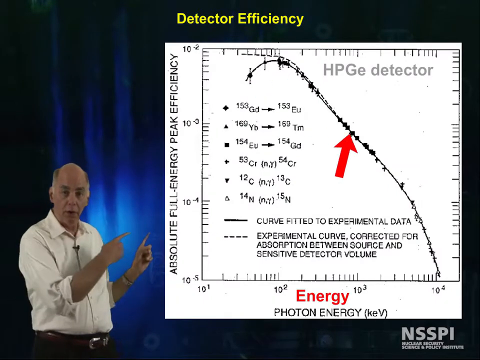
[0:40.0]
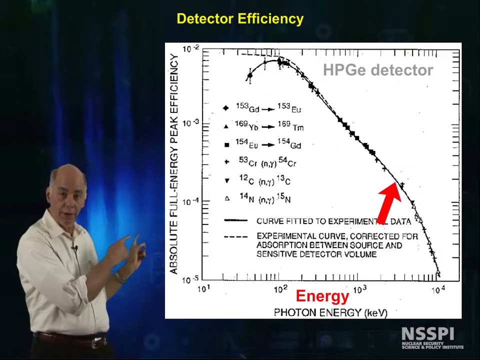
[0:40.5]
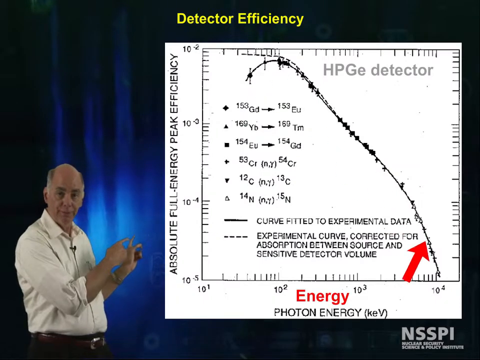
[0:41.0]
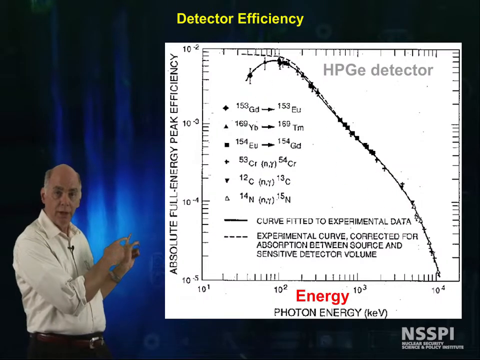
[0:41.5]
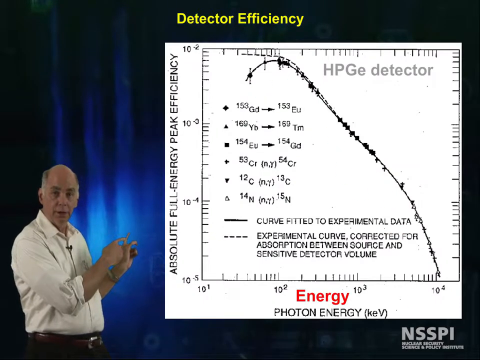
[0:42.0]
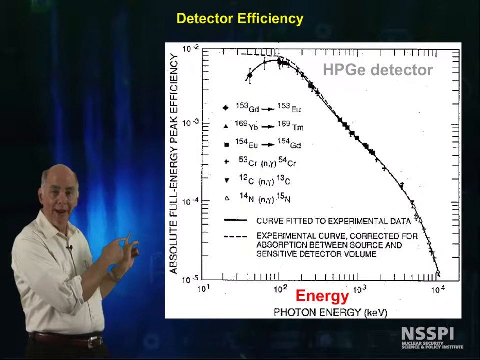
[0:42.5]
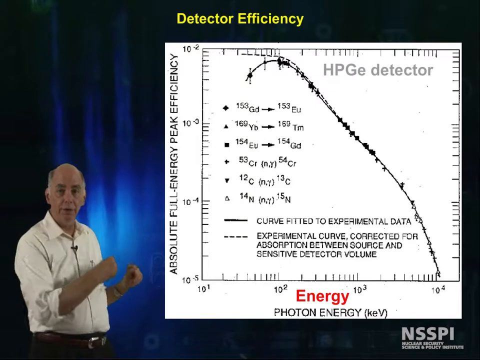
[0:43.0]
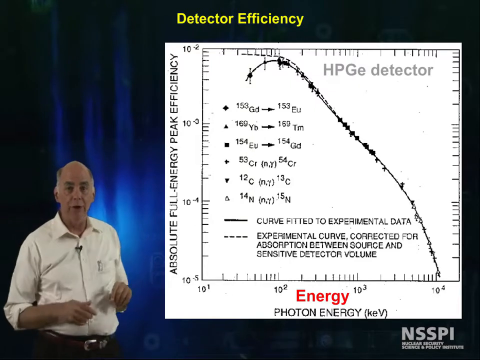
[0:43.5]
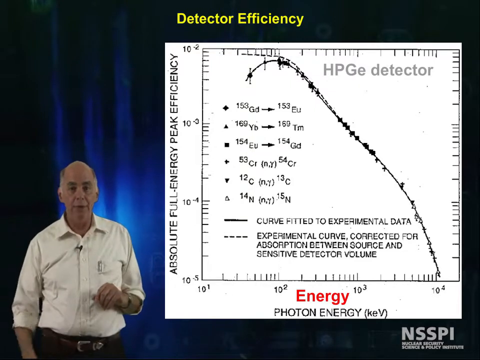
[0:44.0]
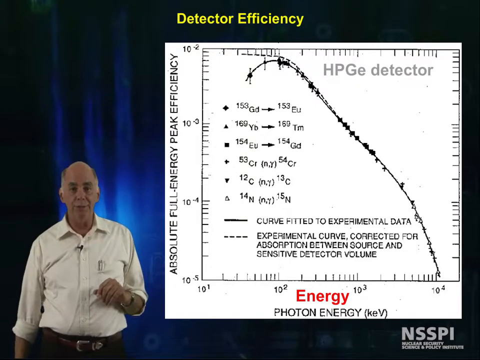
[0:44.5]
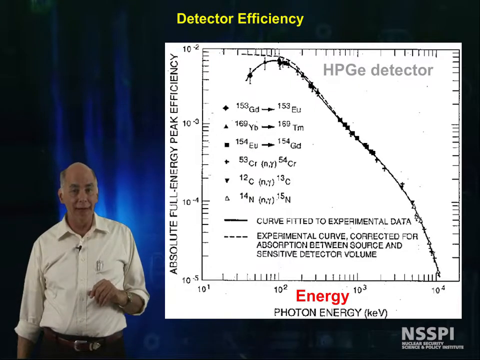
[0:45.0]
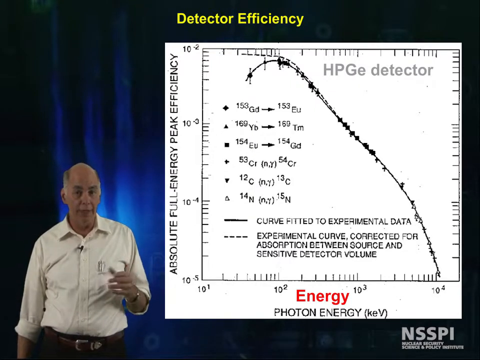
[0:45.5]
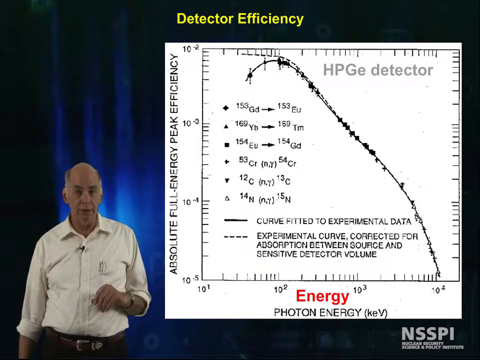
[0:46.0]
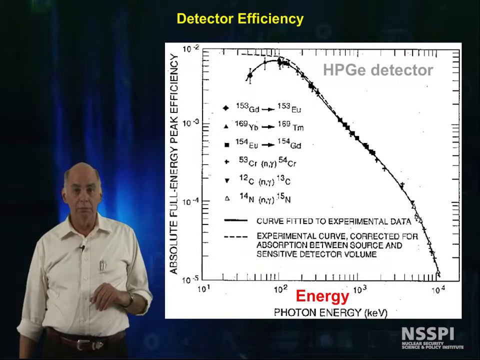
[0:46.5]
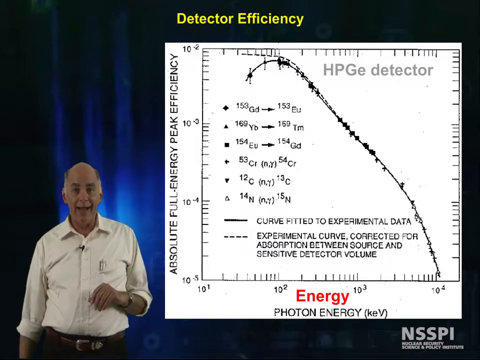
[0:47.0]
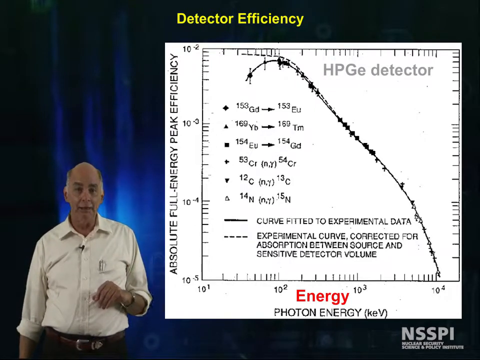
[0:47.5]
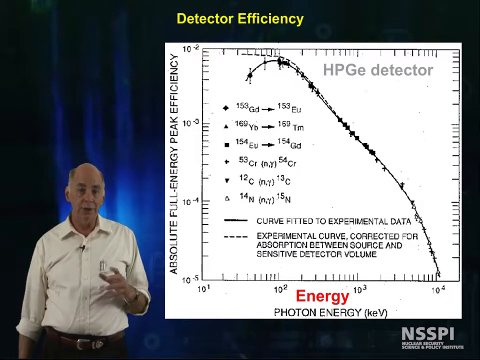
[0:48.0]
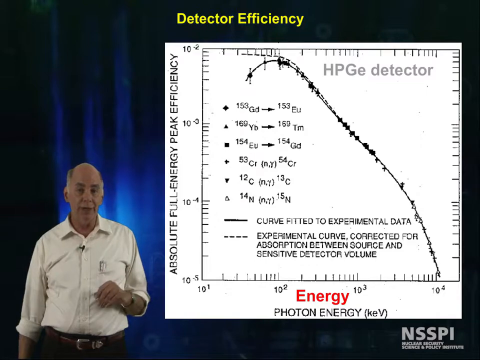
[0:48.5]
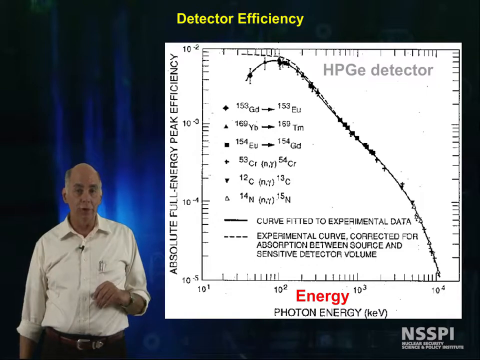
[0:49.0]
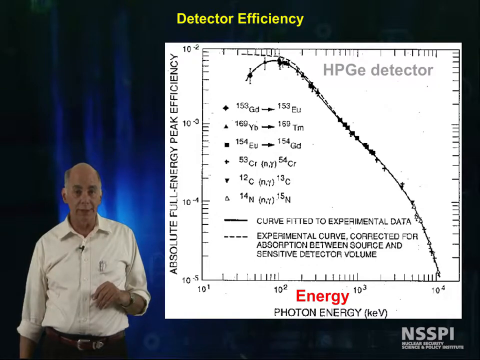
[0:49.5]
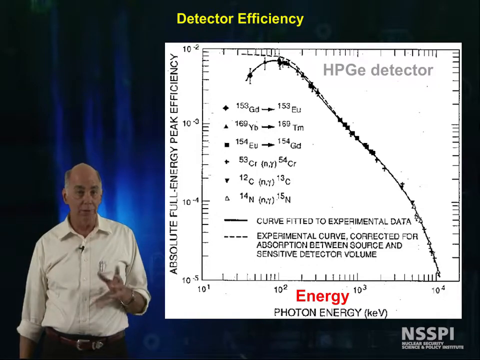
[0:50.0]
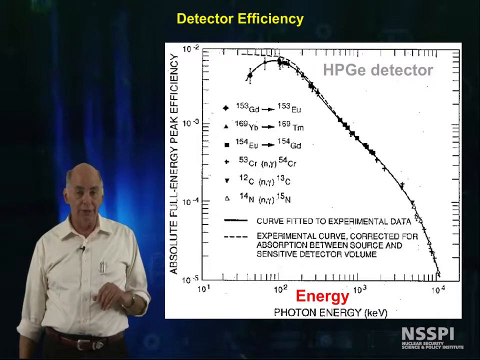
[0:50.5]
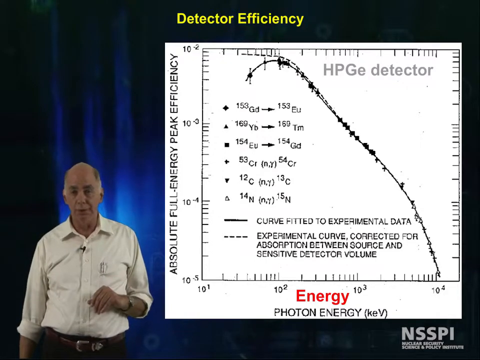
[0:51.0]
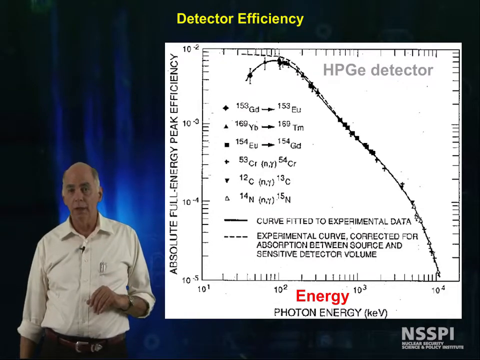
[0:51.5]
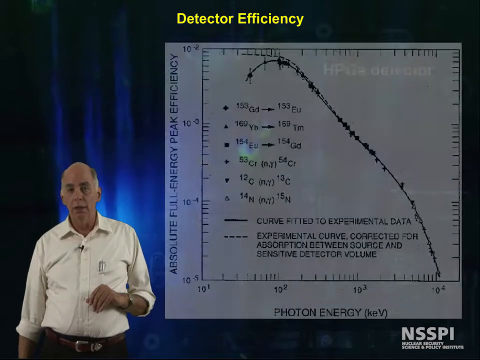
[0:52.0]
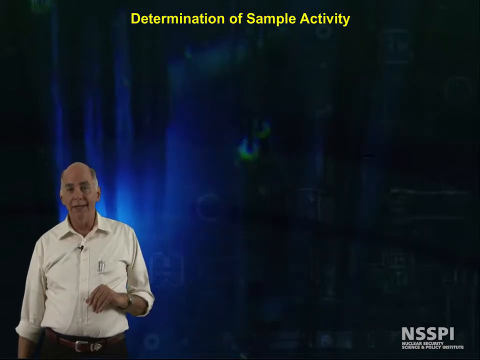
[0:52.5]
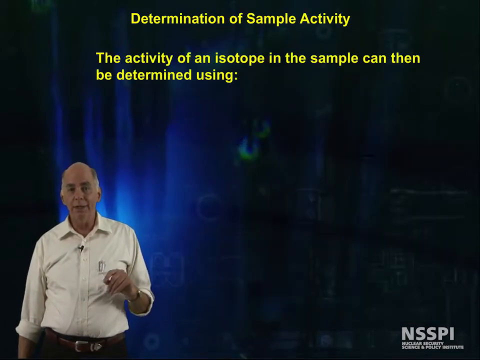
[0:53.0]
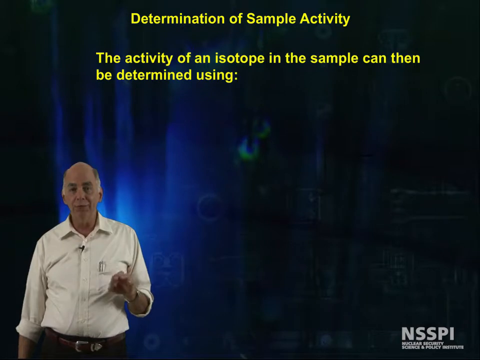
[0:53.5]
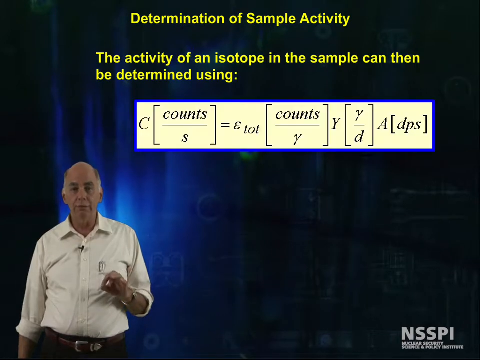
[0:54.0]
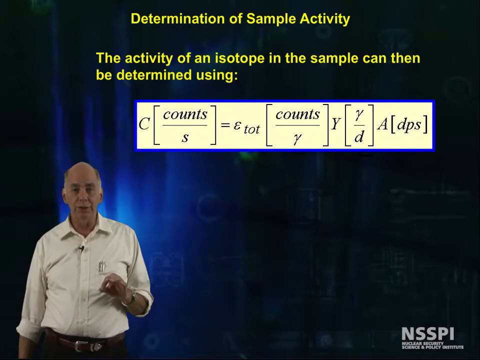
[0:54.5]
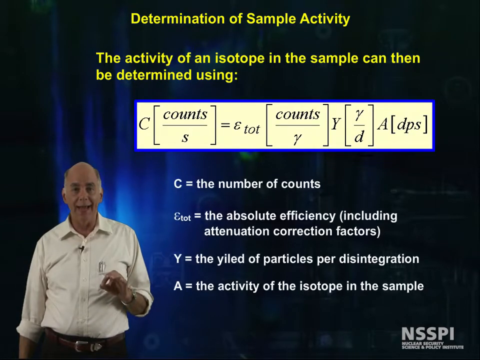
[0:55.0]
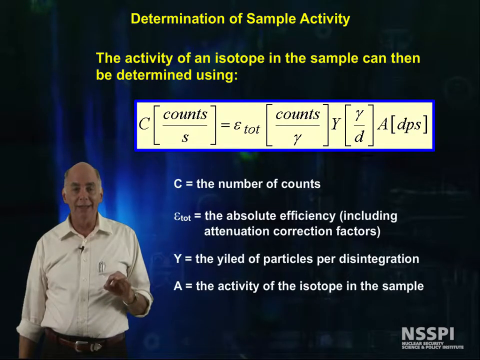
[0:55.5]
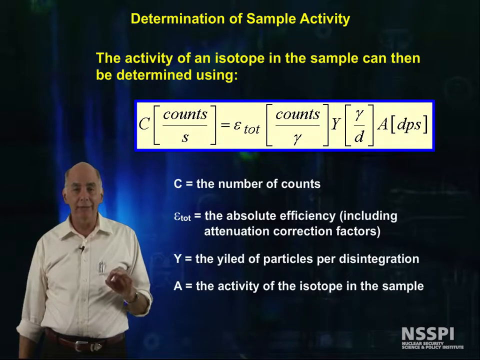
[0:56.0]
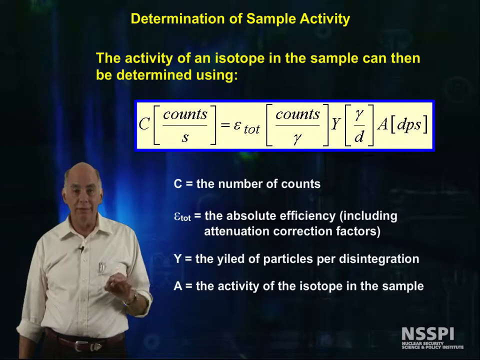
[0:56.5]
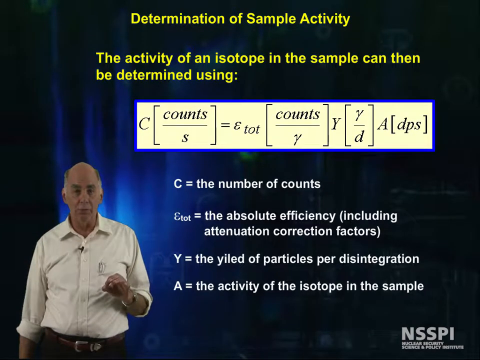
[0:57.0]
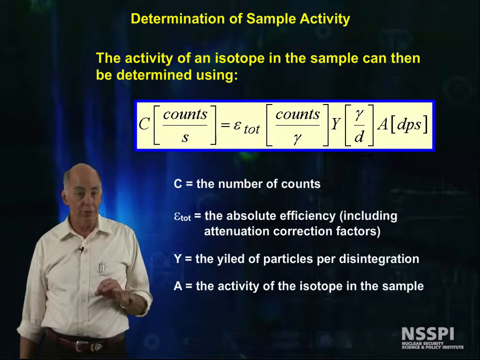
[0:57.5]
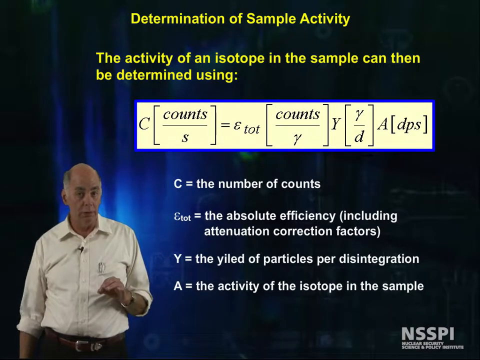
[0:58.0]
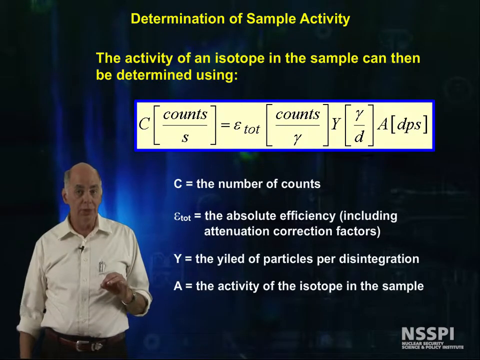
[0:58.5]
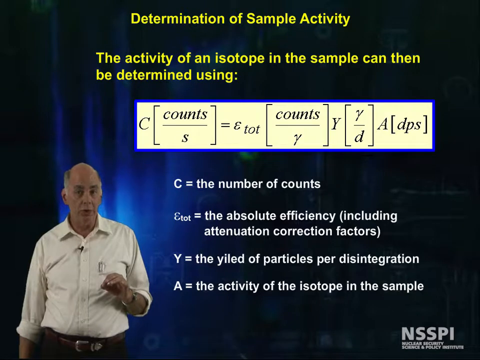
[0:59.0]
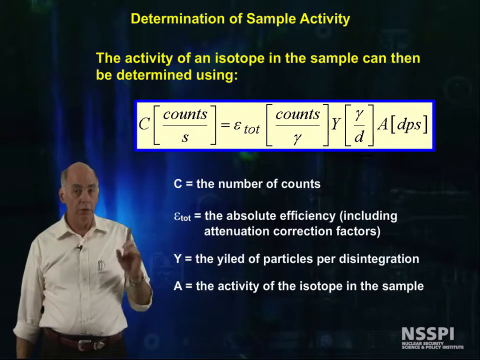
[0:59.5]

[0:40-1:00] A man gives a speech, symposium or class about a science topic, standing on the left side of the screen against a blue and black background. A square graph is displayed as he talks. He is bald and Caucasian, wearing a white business button-down shirt with a small black microphone attached to it. At the bottom of the graph, the word "energy" appears in red text, followed by "photon energy" in black text. On the left side of the graph it reads "absolute full energy peak efficiency experimental curve corrected for absorption between source and sensitive detector volume." The line on the graph starts in the lower right corner, moves upward and curves down at the top. The graph then moves off the screen and new information pops up, with yellow text on top reading "the activity of an isotope in the sample can then be determined using c equals the number of counts y equals the yield of particles per disintegration and a equals the activity of the isotope in the sample."